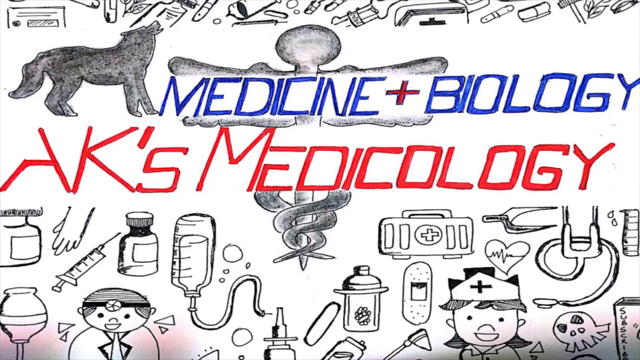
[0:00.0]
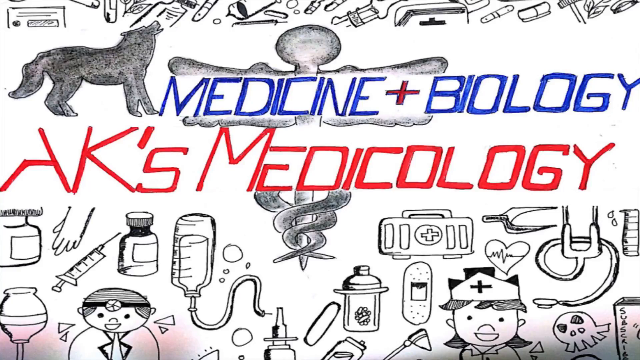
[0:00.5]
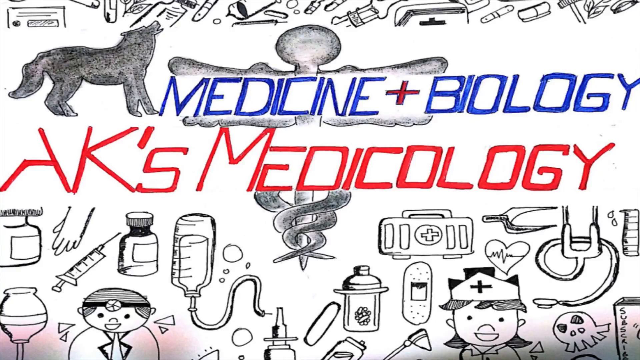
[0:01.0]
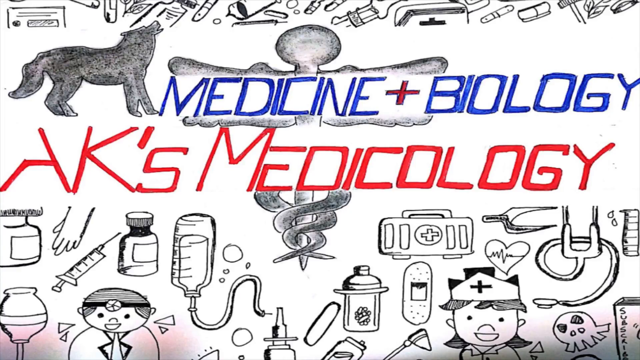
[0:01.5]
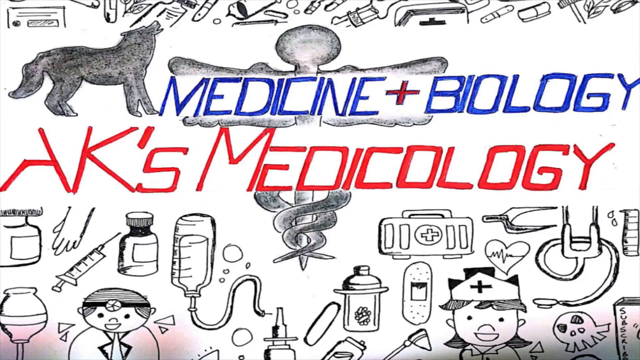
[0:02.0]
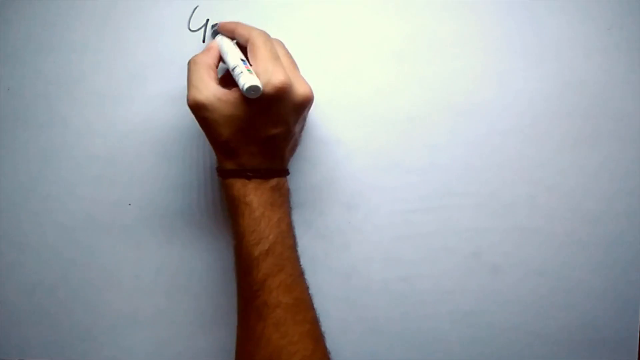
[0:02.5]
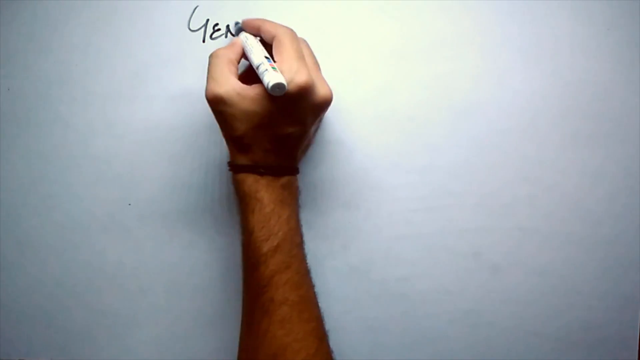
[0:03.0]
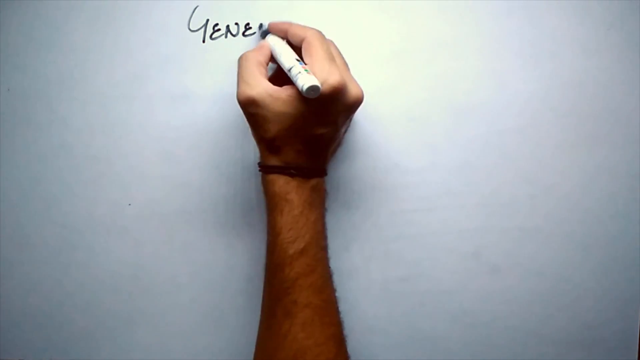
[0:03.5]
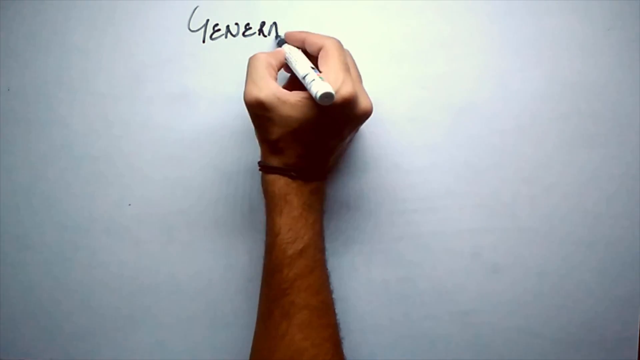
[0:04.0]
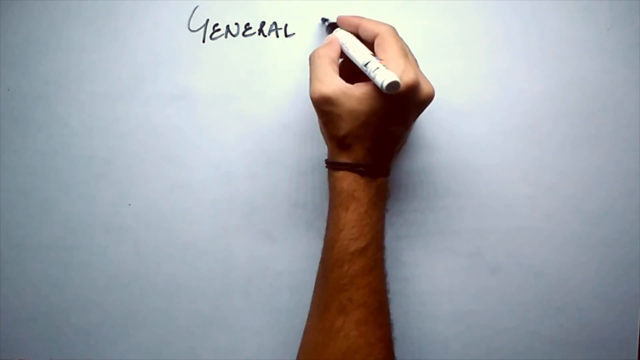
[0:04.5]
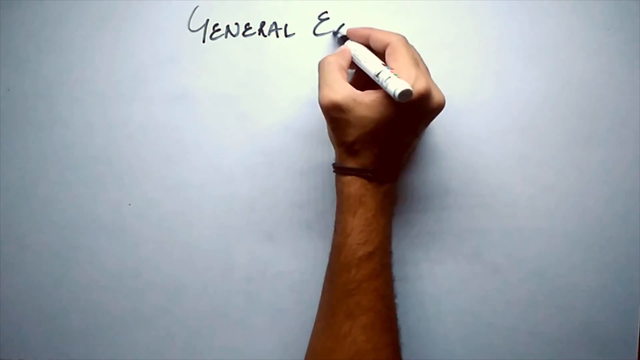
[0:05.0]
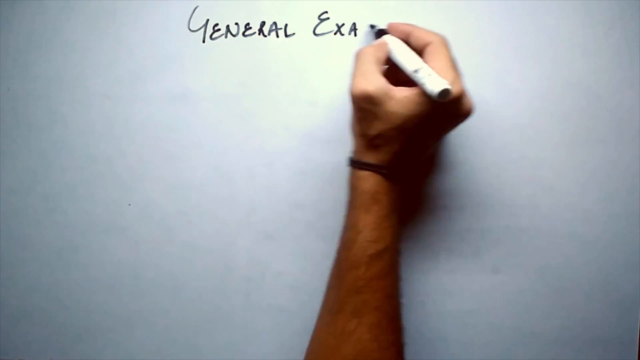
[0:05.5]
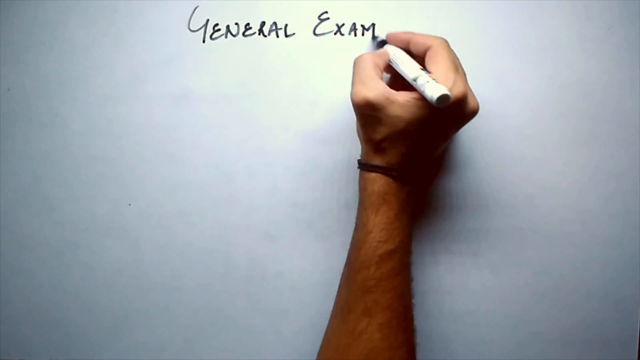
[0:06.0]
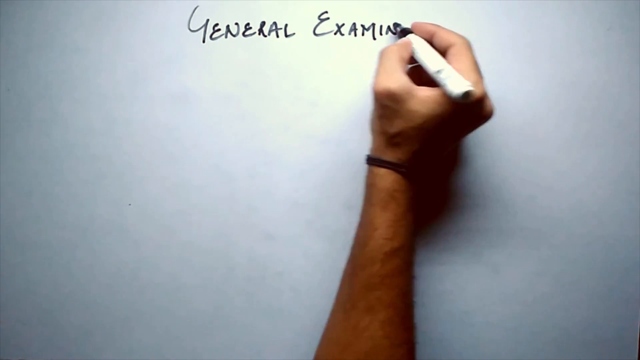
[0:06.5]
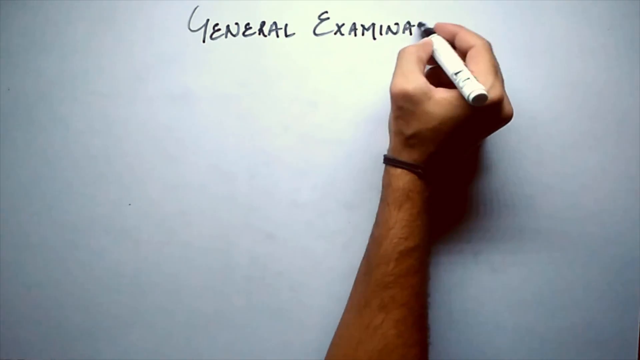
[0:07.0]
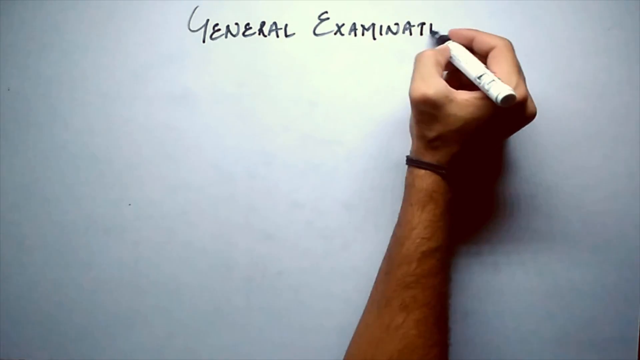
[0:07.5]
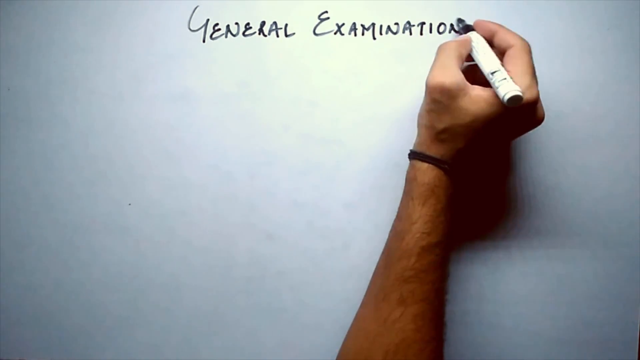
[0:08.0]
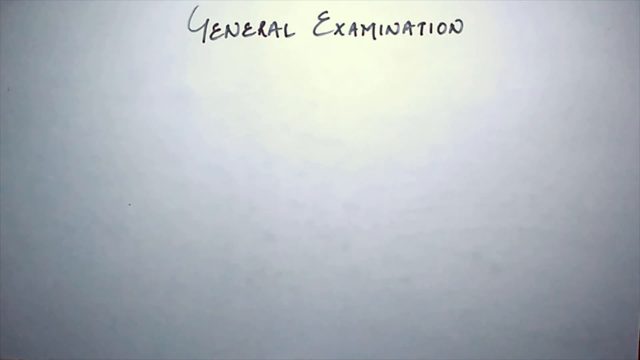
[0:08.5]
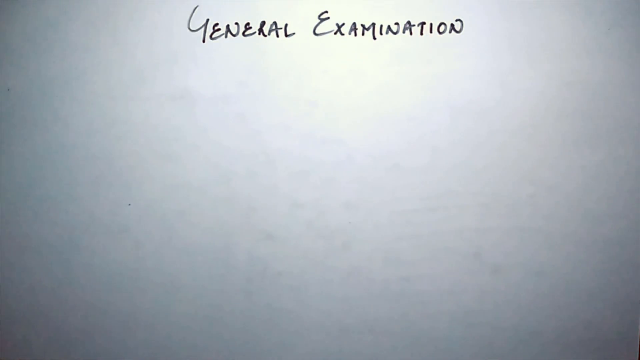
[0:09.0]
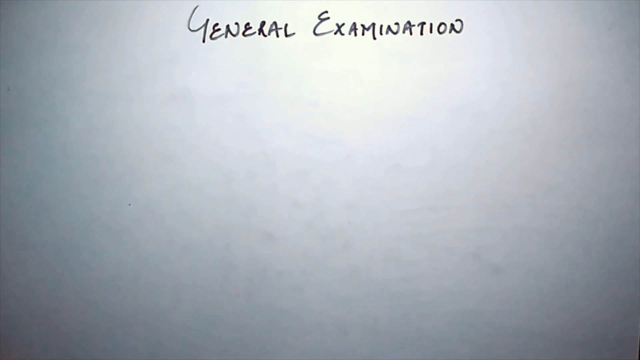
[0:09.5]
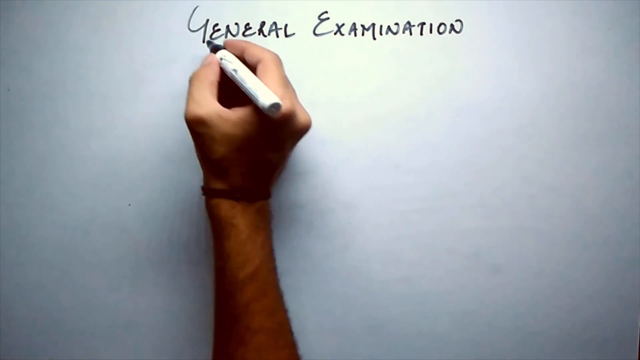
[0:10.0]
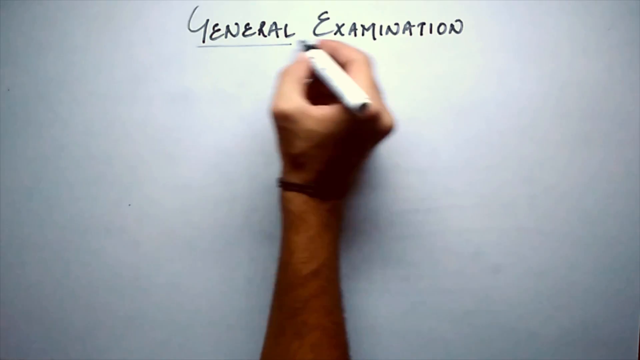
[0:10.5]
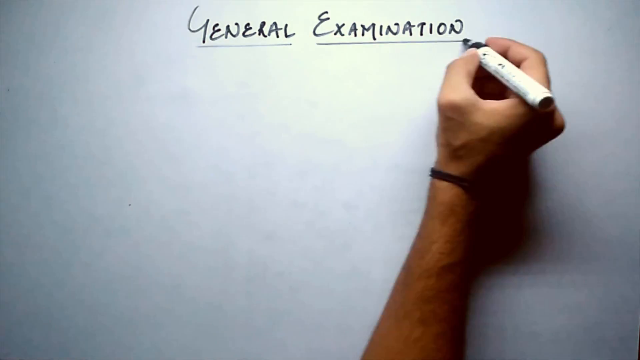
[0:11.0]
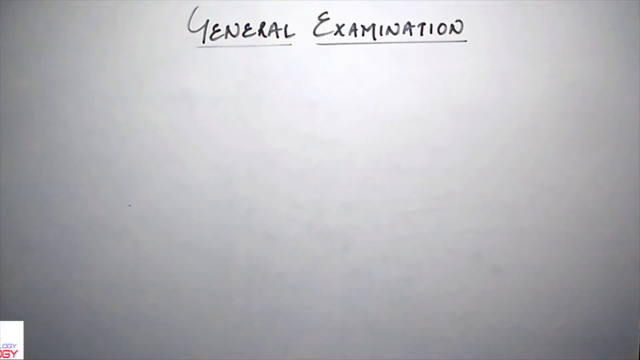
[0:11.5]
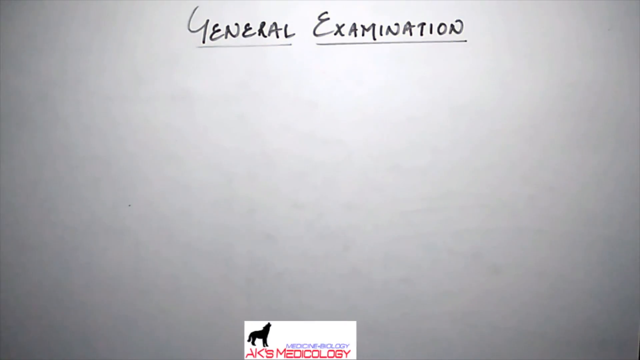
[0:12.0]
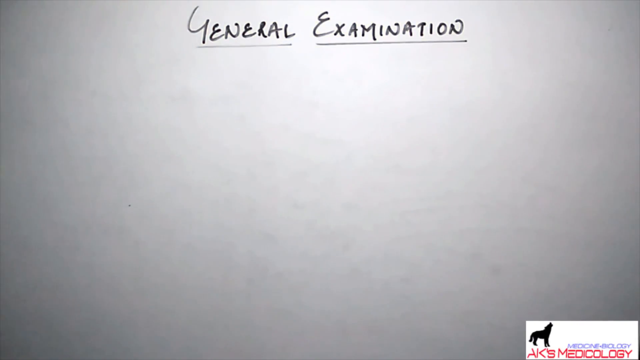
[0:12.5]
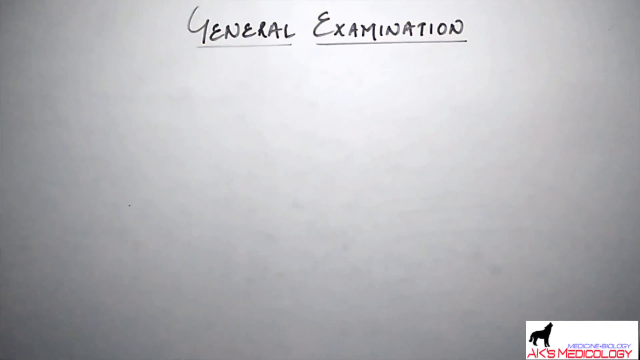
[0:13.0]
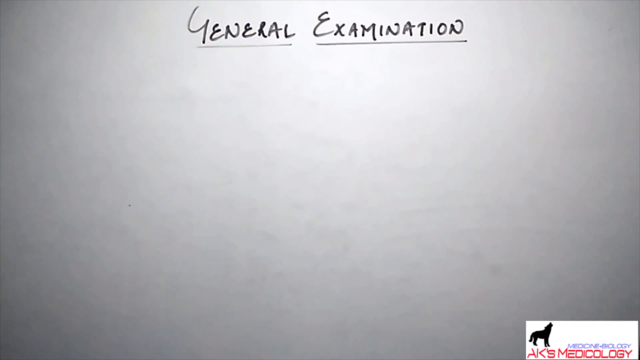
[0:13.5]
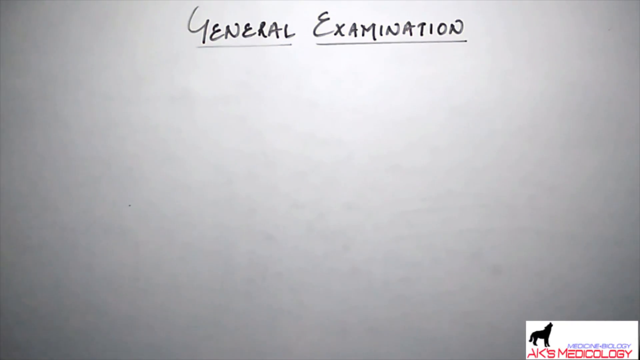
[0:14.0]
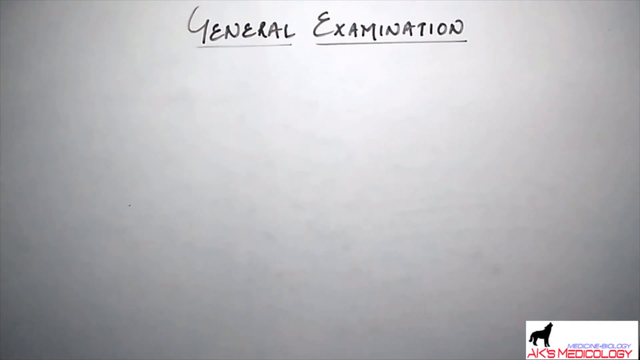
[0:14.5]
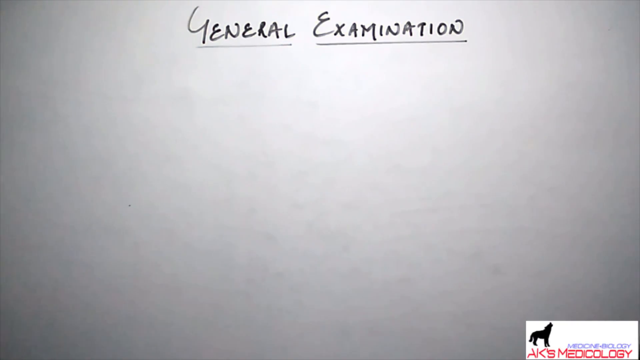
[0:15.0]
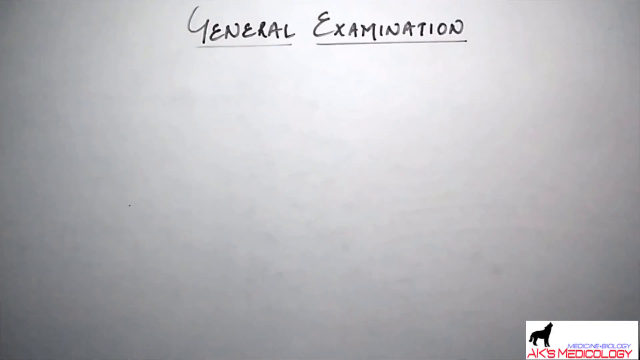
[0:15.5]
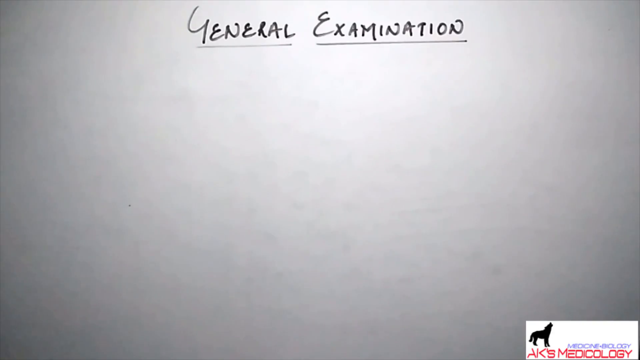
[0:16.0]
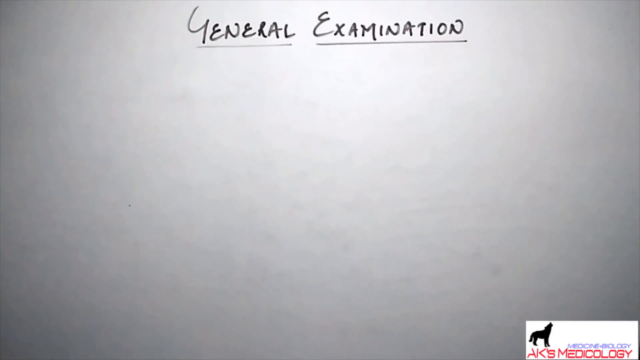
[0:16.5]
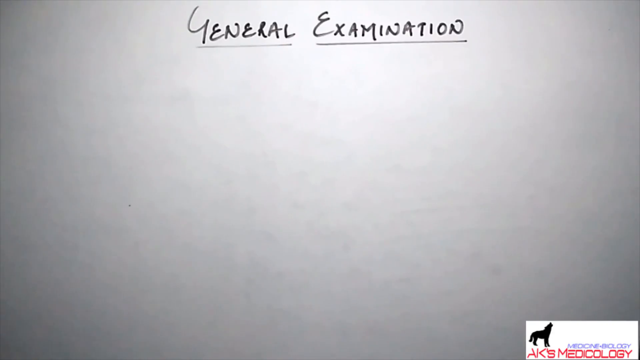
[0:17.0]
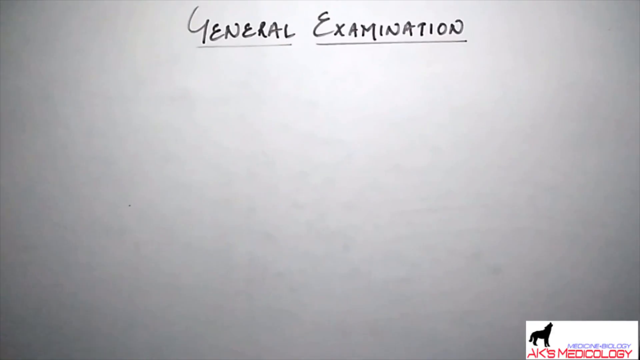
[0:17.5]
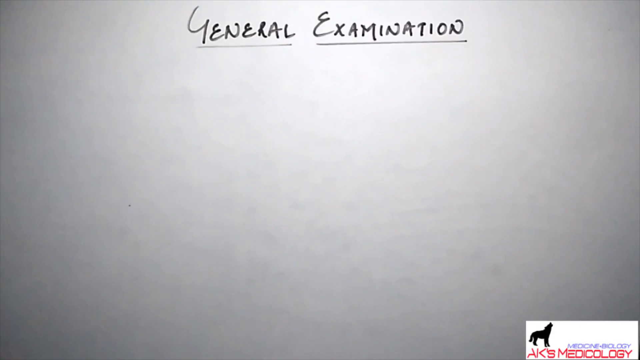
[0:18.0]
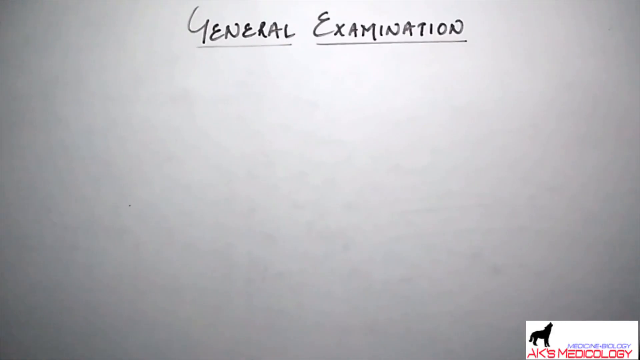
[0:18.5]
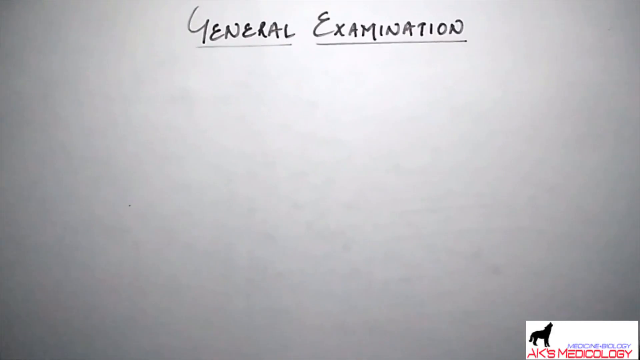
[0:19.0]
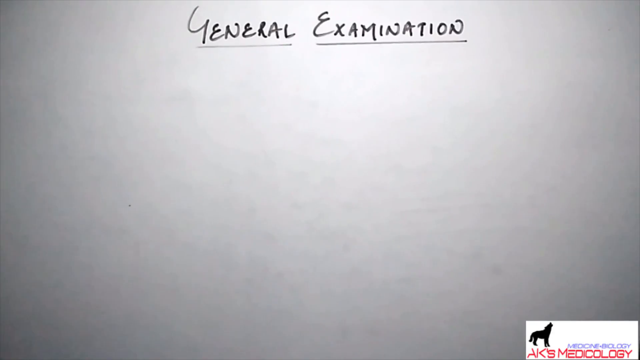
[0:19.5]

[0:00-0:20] The video opens with a title that reads "medicine plus biology" on a white background, surrounded by many drawings of signs and symbols representing health and the medical field: a syringe, a pill bottle, a heart monitor, a heart, a band-aid, a coyote or a wolf, a cassette tape, a scalpel, a ruler, and a nurse wearing a hat. All of the drawings are in black ink; some are colored in and some are not. The text is blue, with some of it written in red. All the images relate to the medical field in some way.